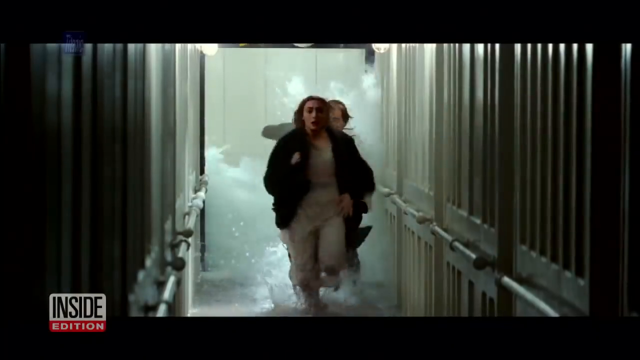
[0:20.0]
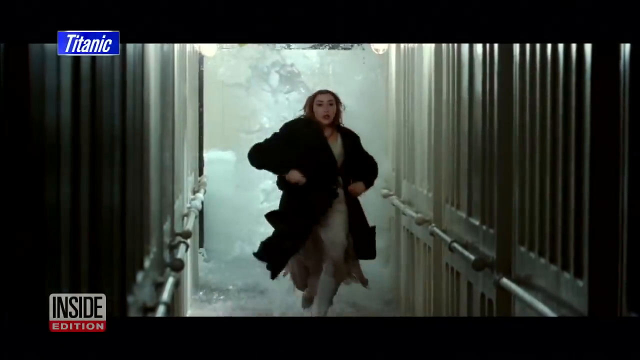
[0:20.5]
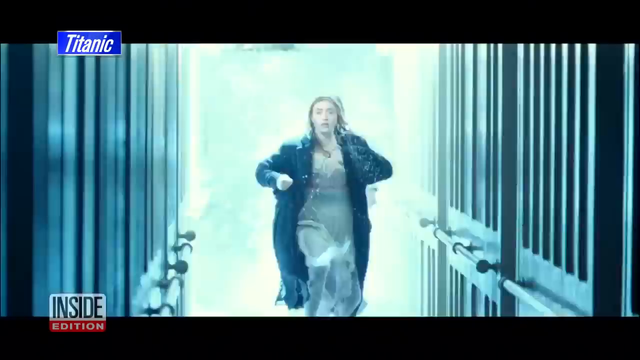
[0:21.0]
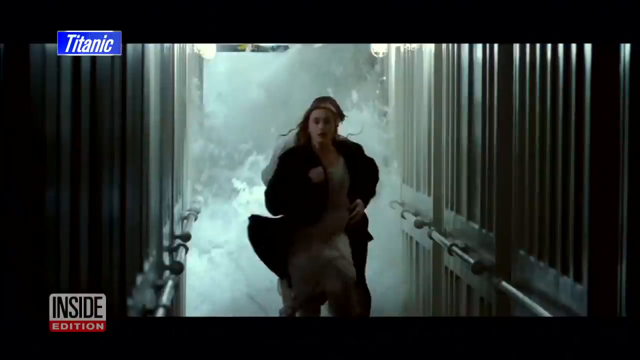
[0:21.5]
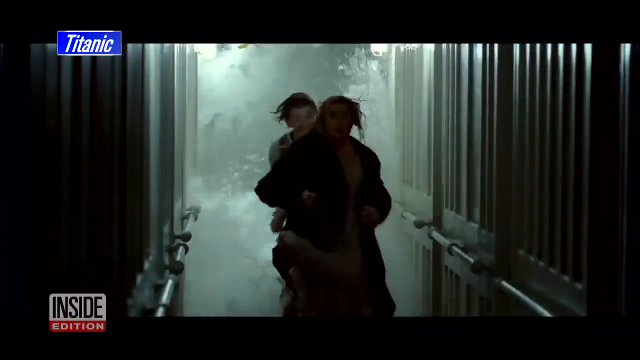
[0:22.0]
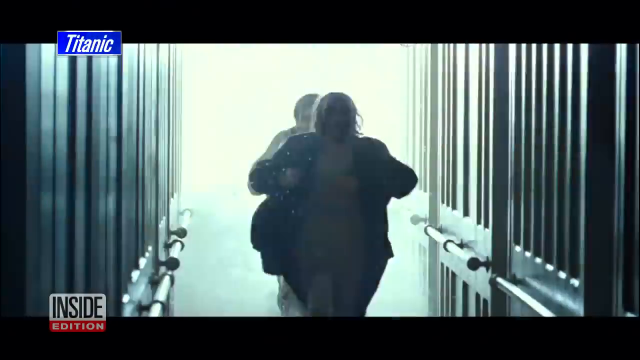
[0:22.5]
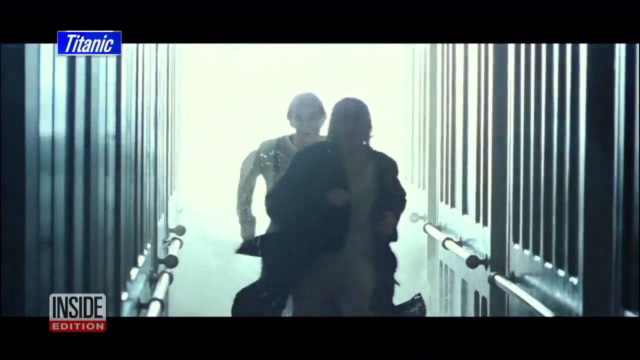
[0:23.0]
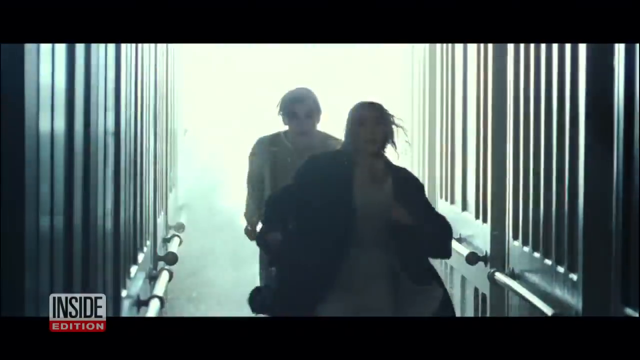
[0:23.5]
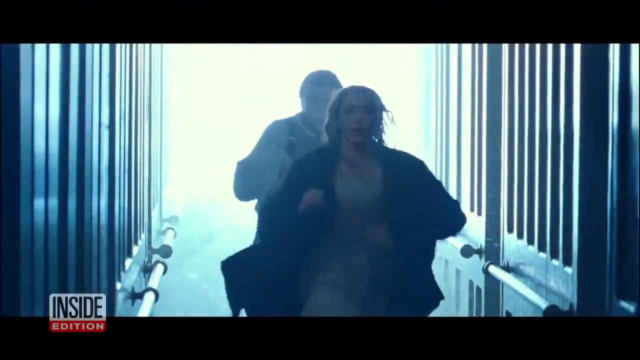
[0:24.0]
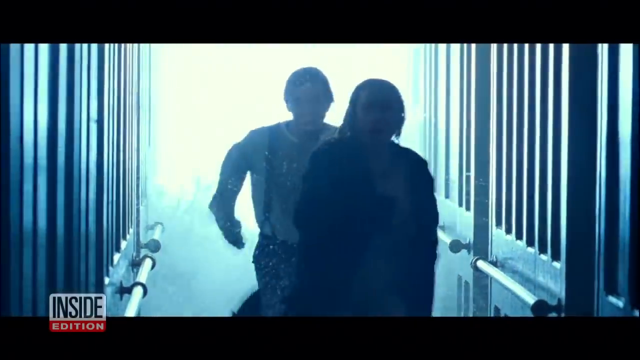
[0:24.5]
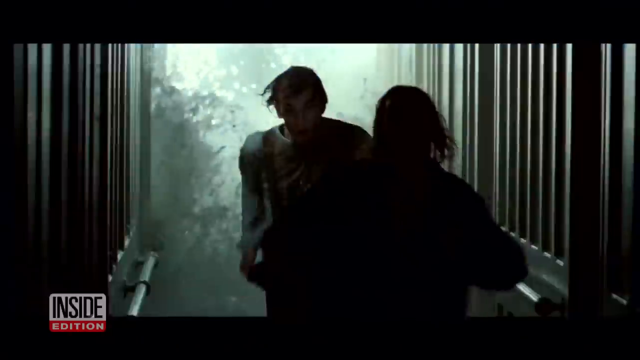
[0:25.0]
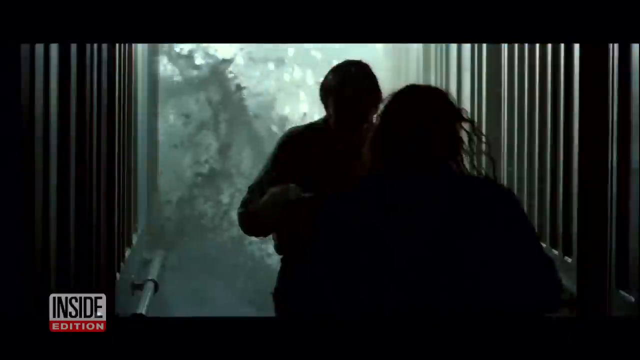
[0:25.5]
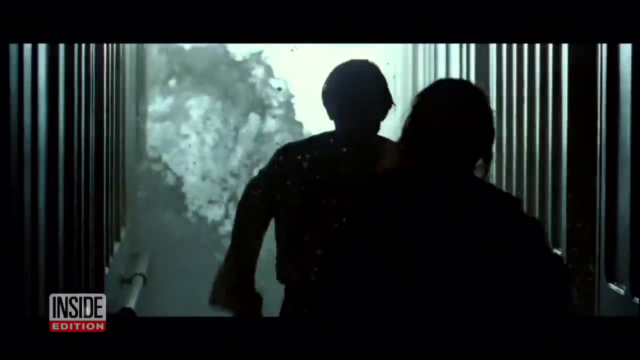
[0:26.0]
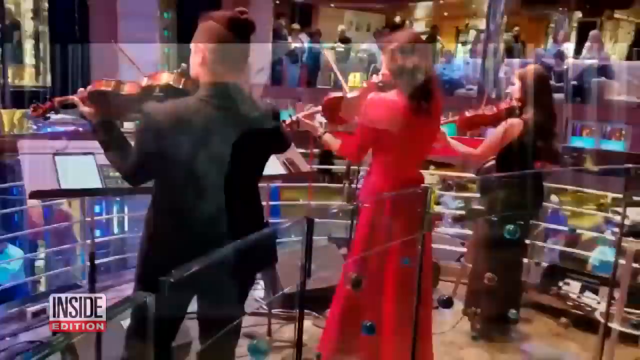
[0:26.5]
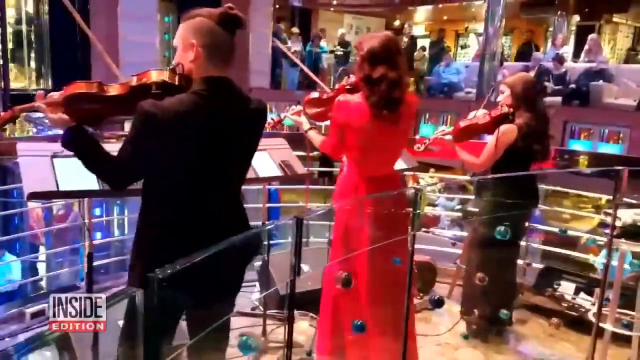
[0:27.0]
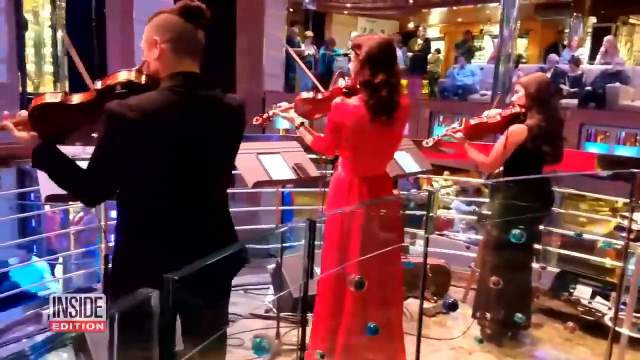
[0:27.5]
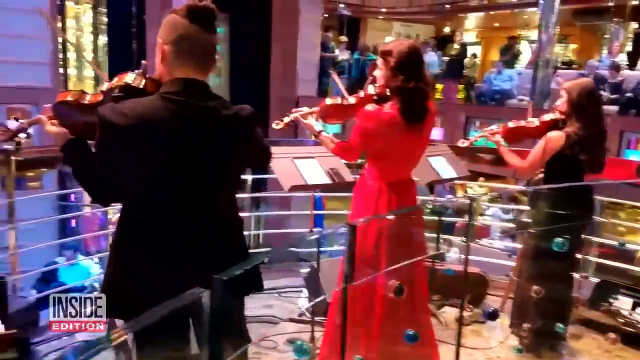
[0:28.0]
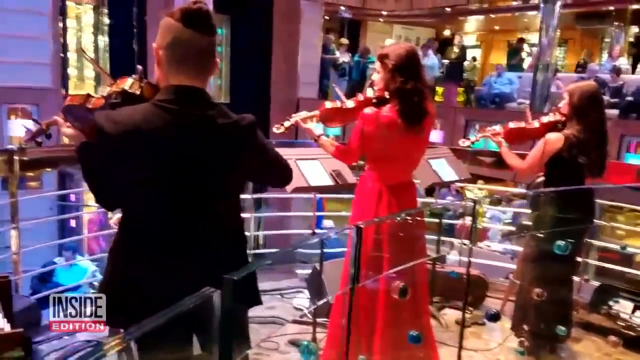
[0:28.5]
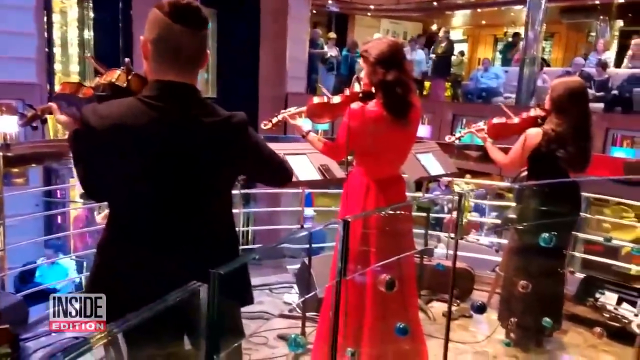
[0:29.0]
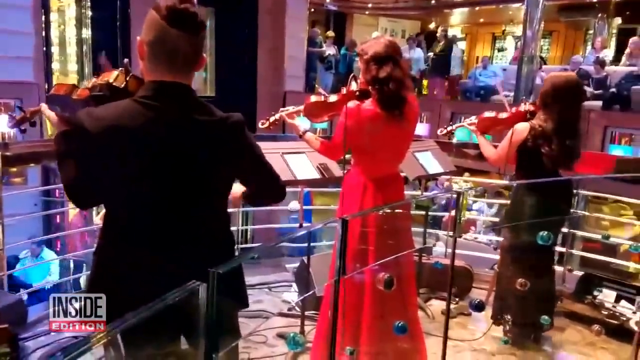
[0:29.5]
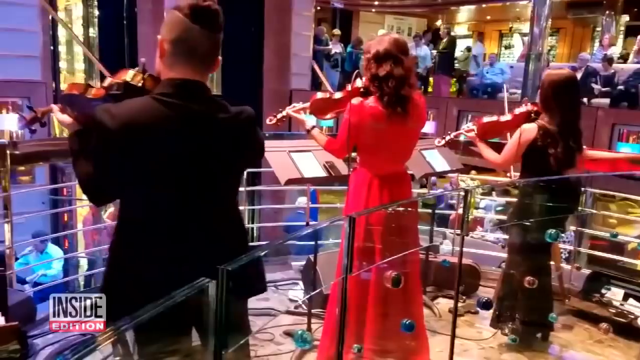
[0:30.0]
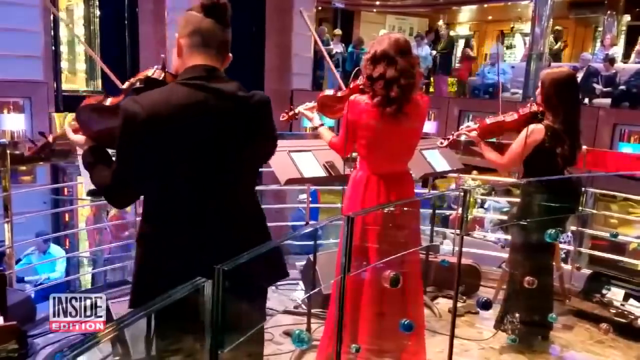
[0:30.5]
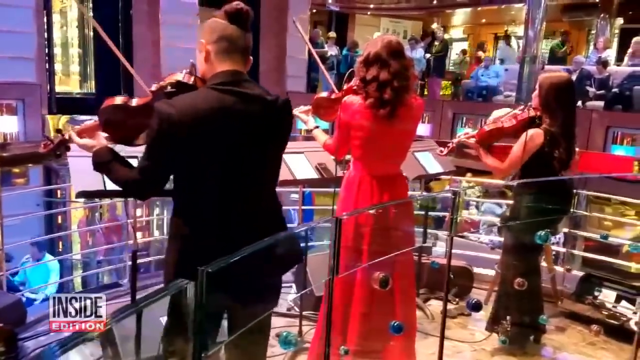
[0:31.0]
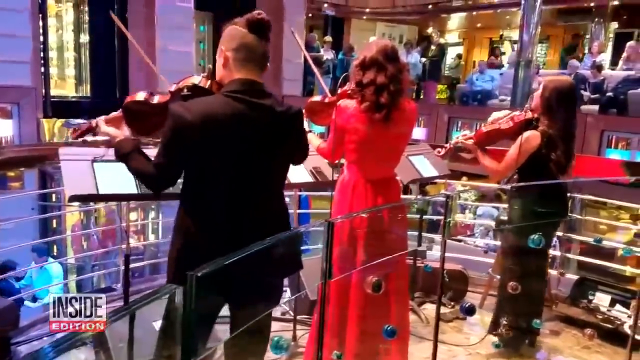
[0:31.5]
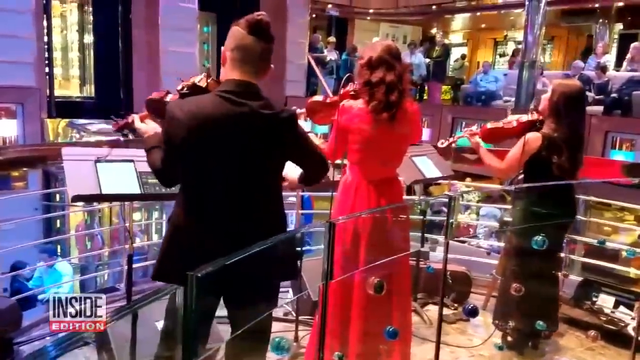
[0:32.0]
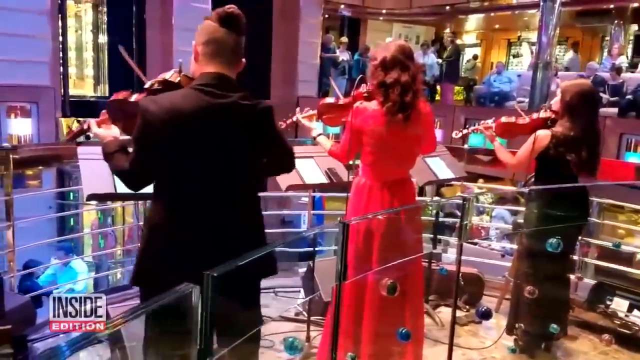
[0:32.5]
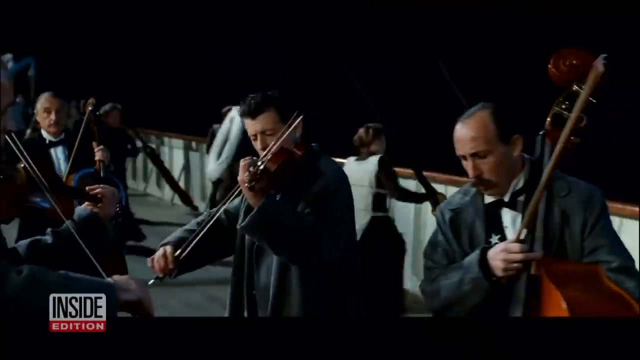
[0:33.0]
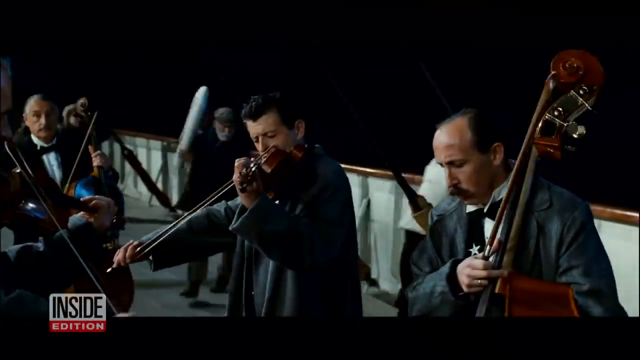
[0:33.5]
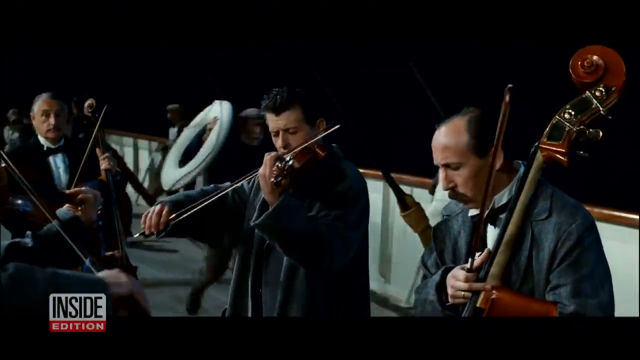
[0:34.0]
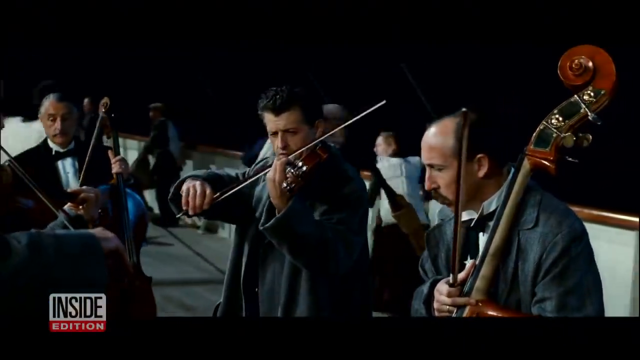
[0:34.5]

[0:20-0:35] Leonardo DiCaprio and another actress from the movie Titanic both appear to be running within the hall, trying to get away from the water rushing in. Both have serious, fearful expressions. Next come what appear to be musicians playing the violin, followed by the movie scene in which violinists play against a backdrop of the Titanic while individuals get ready to hop into the water. The violinists appear to ignore the commotion as they keep playing. They appear to be wearing suits and are gathered together, seemingly ignoring the danger and accepting their fate as they continue performing on their string instruments. Some of them appear to have instruments other than violins.